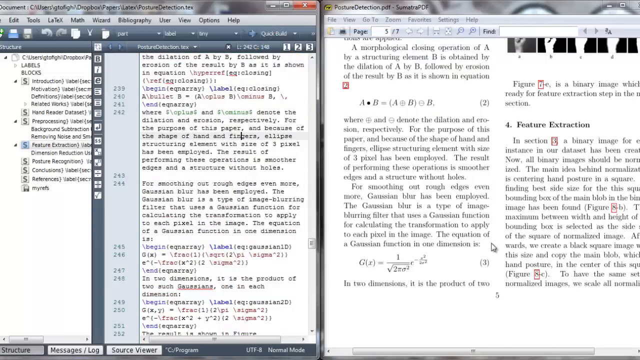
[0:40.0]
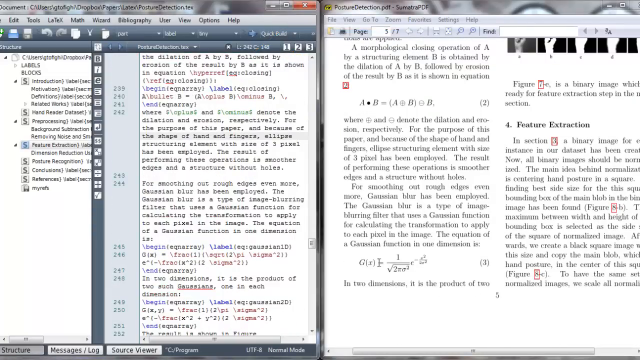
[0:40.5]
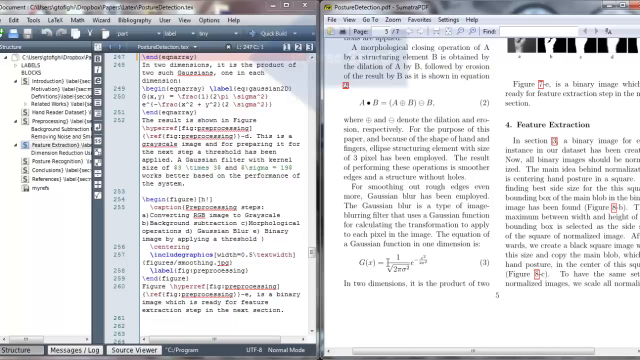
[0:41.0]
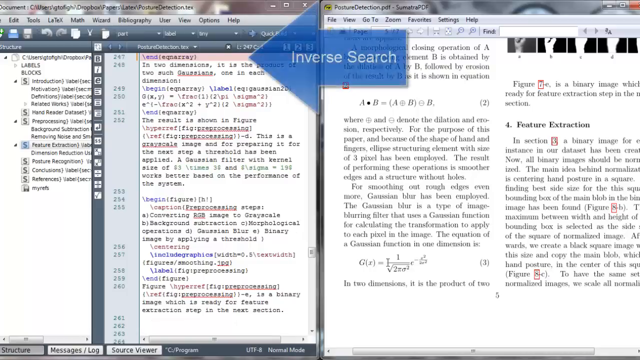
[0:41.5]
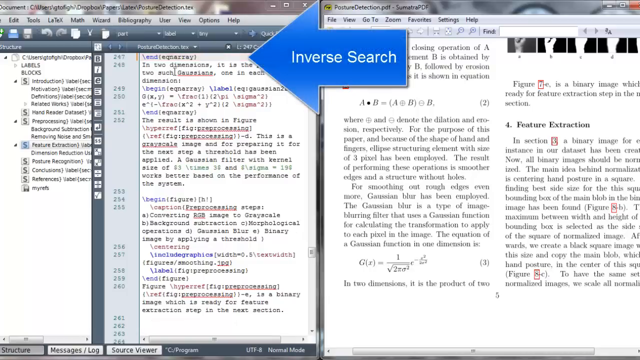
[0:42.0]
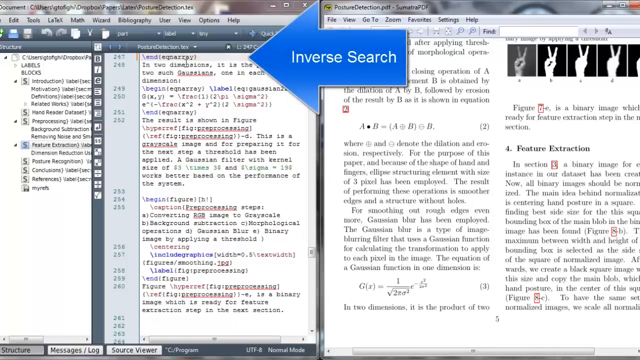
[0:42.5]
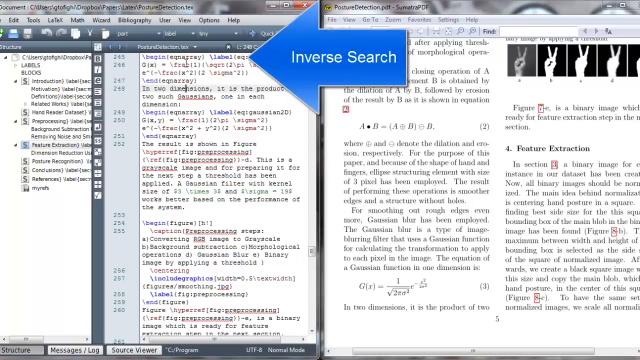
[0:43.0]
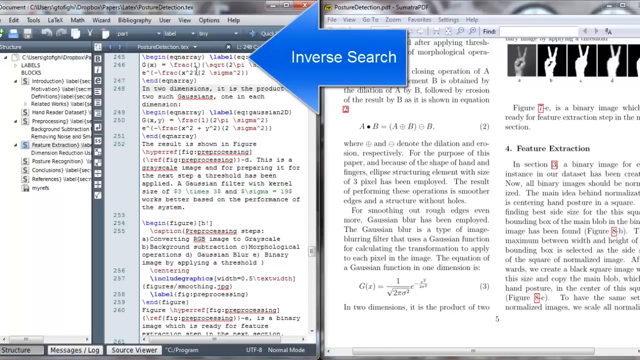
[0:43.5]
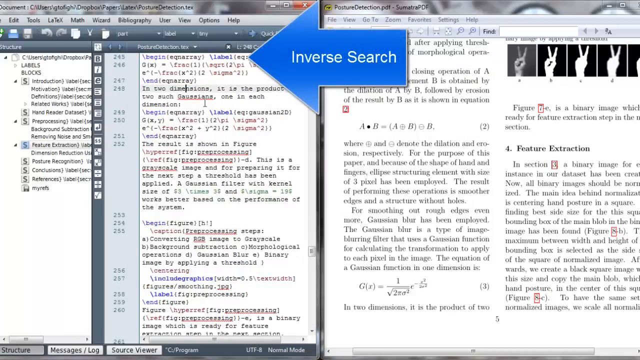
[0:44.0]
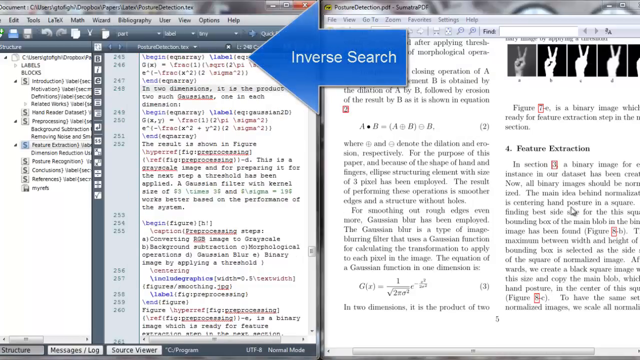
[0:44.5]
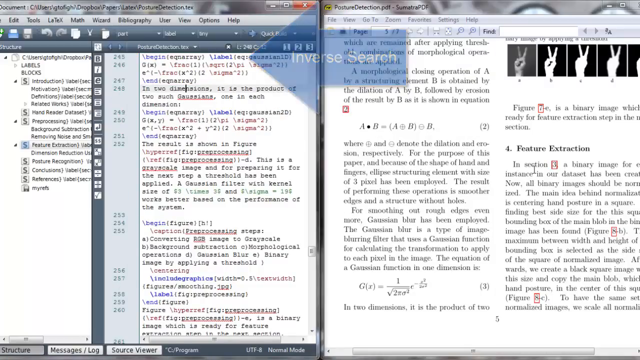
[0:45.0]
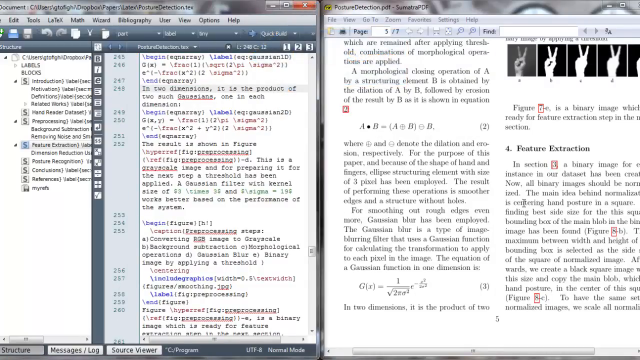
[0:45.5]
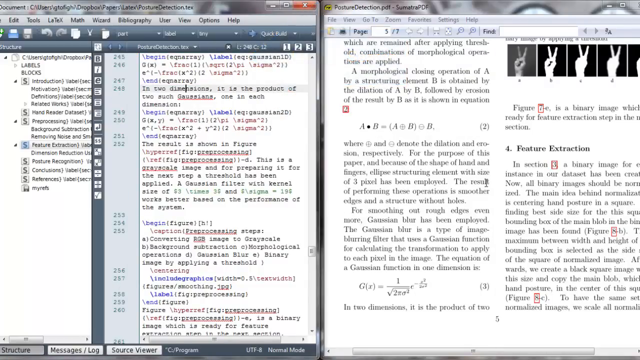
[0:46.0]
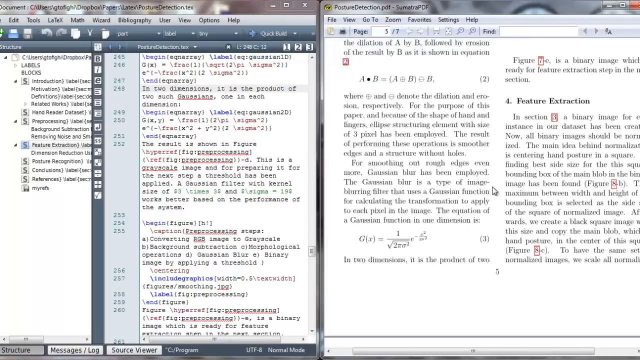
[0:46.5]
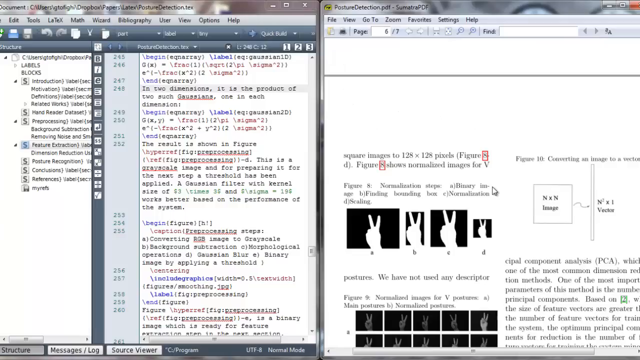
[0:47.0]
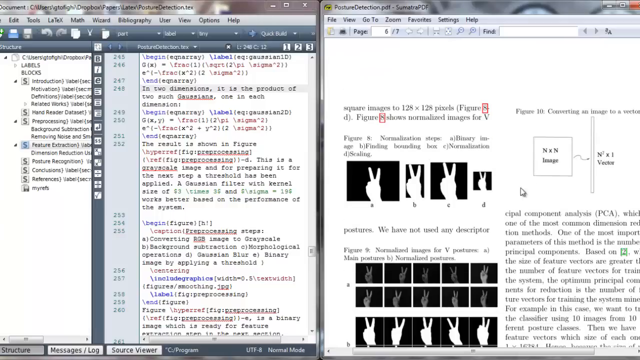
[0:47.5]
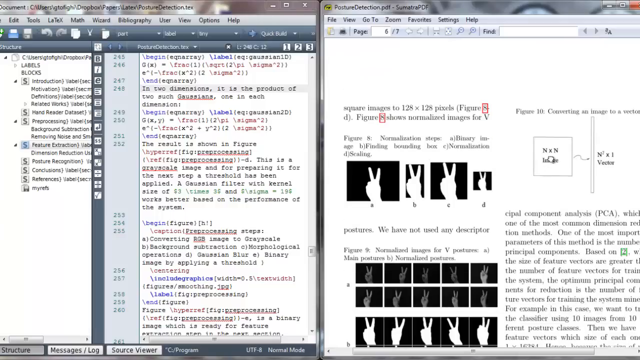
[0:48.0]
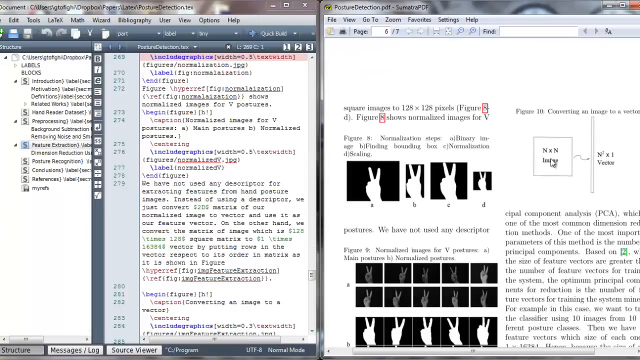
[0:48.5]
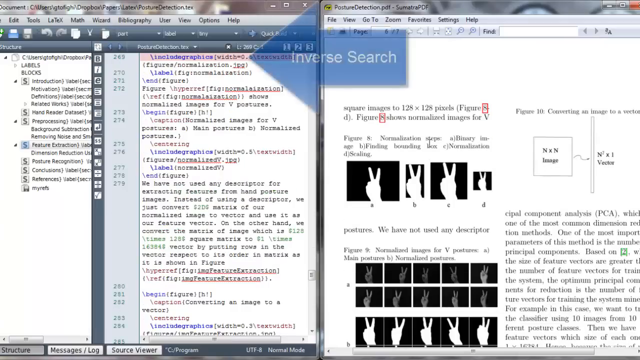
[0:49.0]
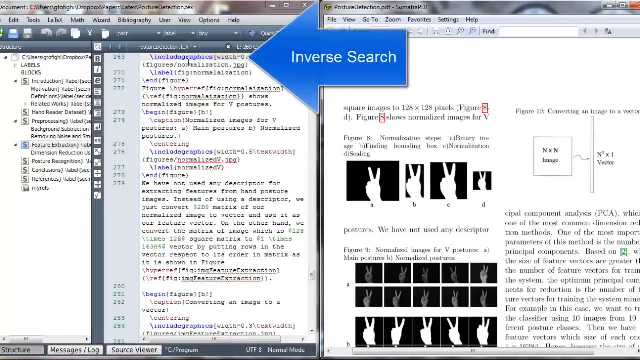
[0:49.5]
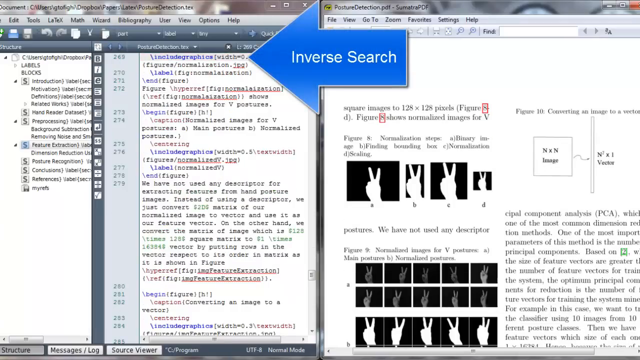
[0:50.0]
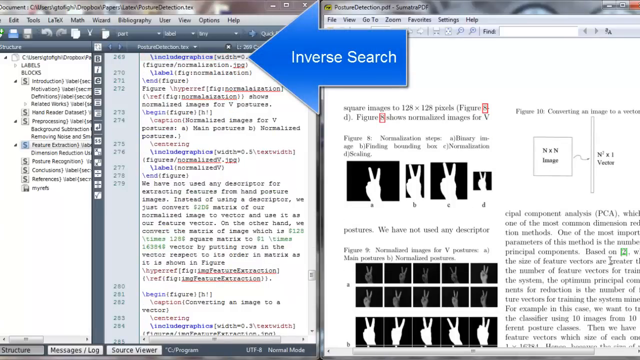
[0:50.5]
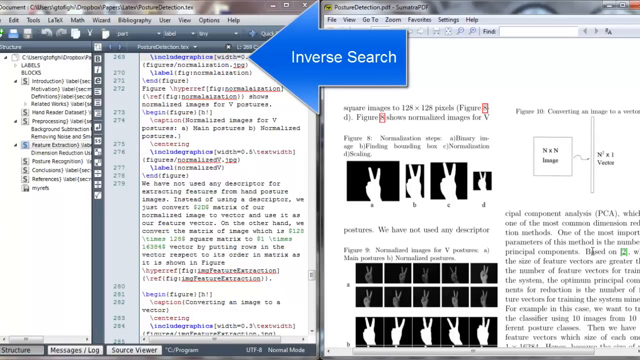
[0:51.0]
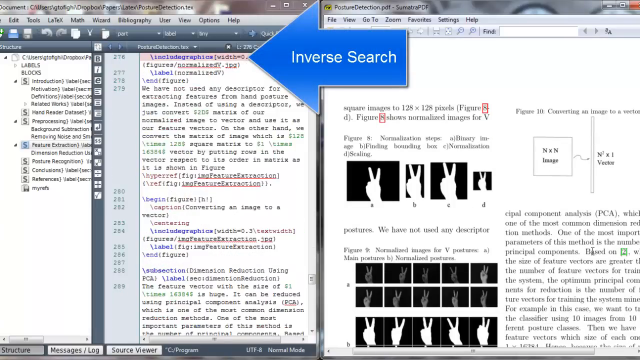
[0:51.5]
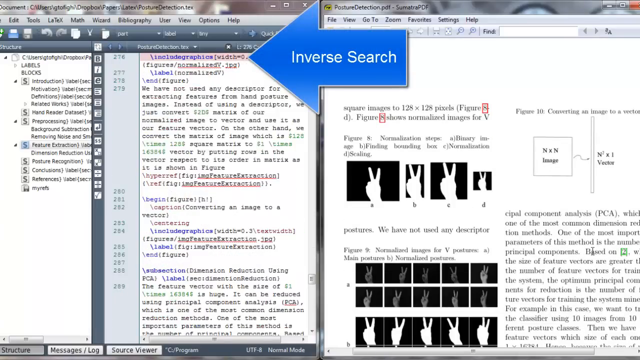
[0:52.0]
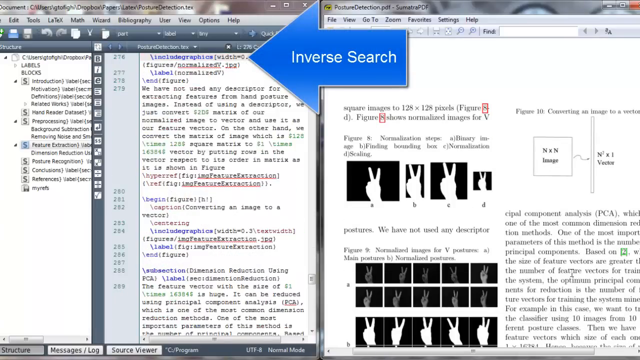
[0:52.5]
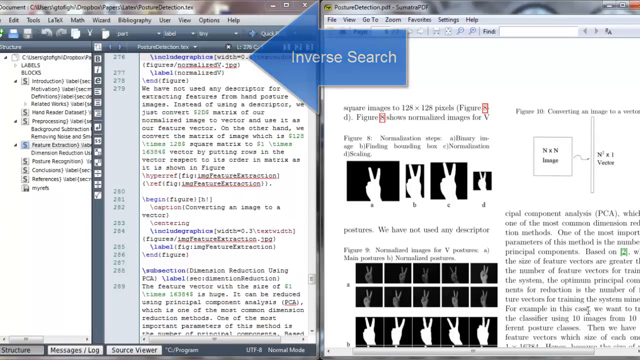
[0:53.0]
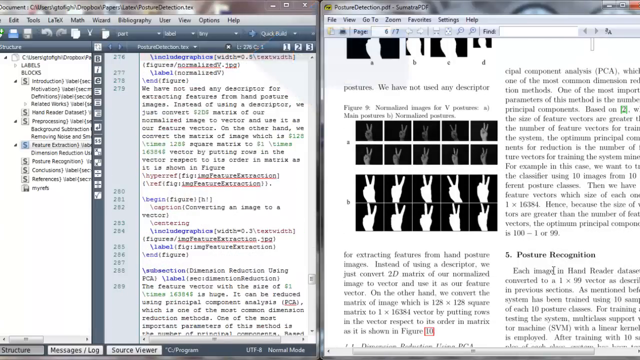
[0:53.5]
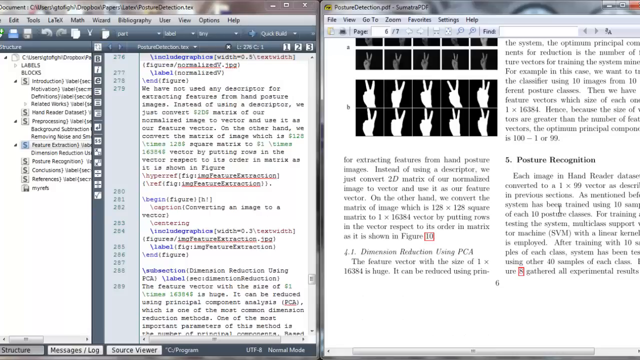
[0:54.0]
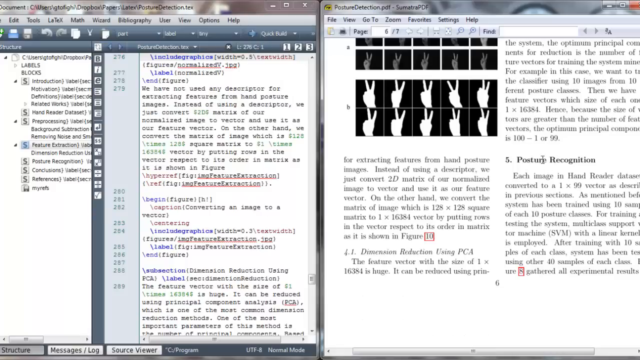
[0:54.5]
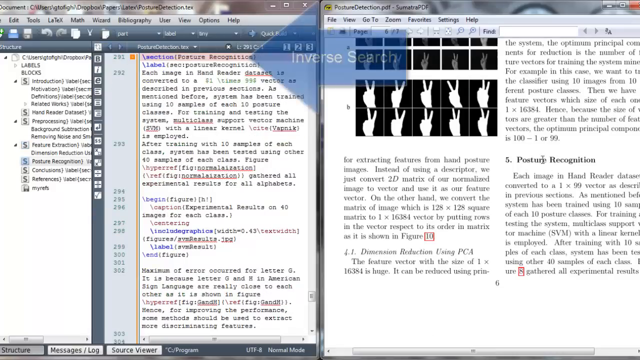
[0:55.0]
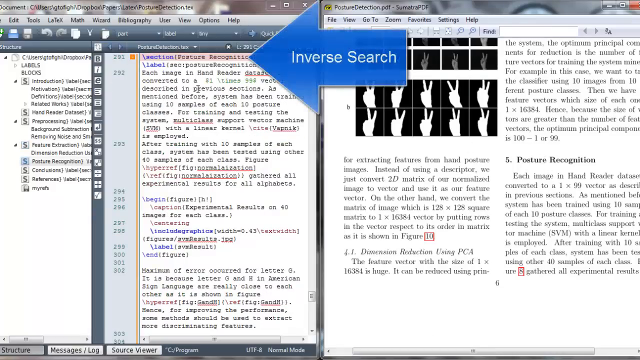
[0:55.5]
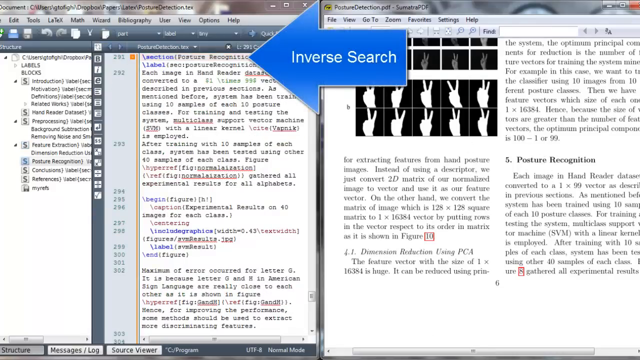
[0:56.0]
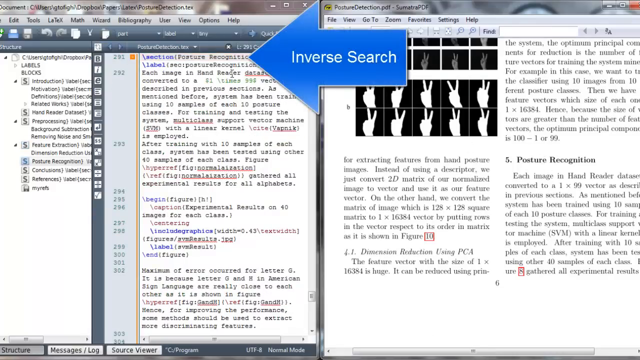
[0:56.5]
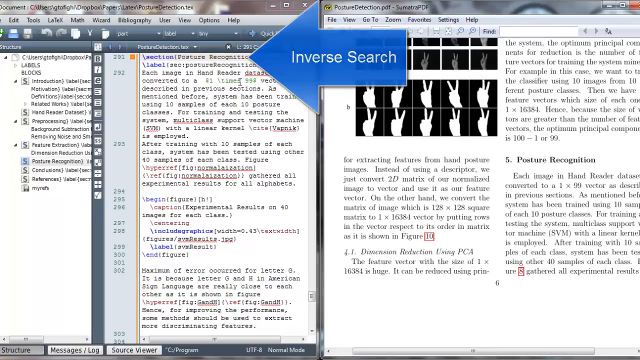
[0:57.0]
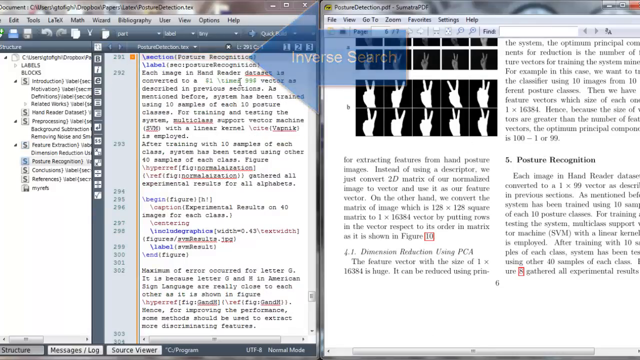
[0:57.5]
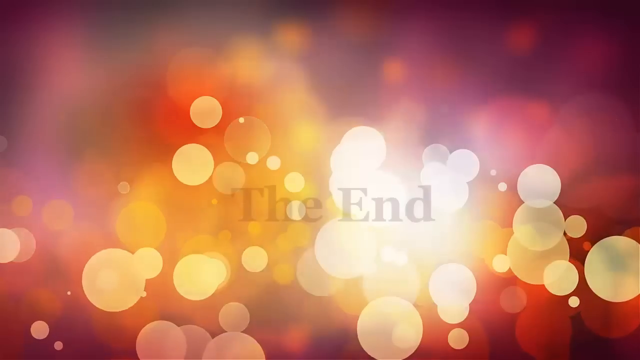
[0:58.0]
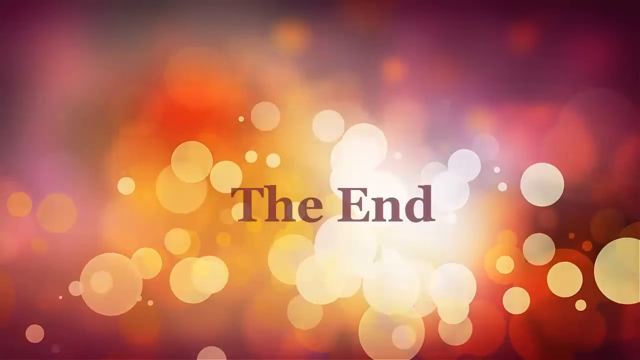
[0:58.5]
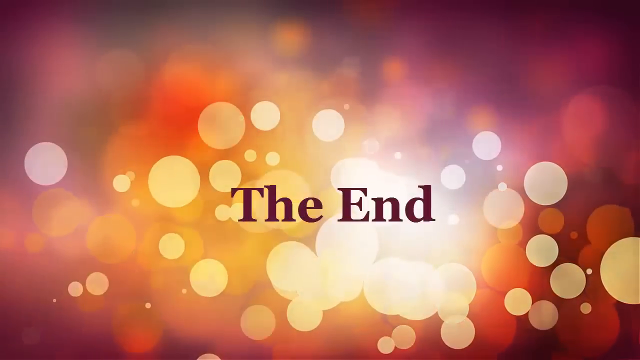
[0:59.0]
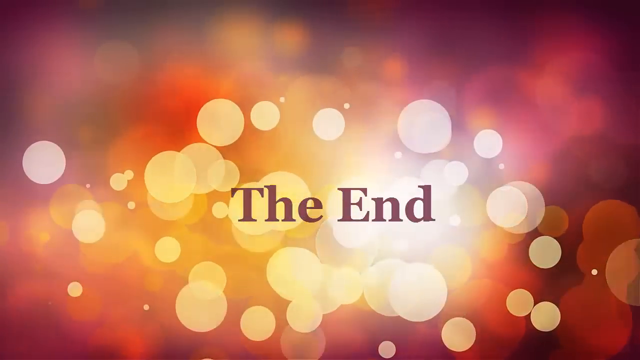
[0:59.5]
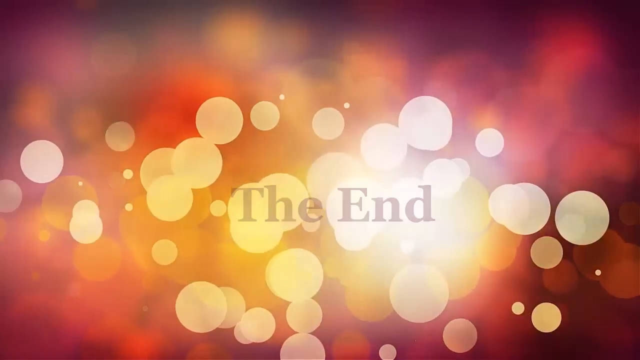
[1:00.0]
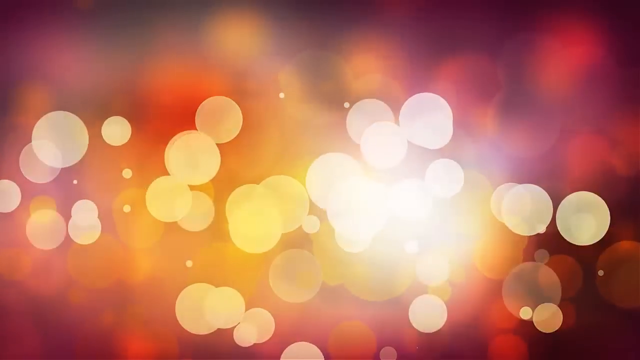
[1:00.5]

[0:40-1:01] The person performs more inverse searches. He appears to click on things within the PDF document itself, and on the left side of the screen, apparently the program itself, what he clicks on is recognized and shown. The PDF document also contains math equations and functions, though most of it seems to be about hand signatures and posture recognition. The video ends shortly after, with the same introductory visual effects shown at the end.